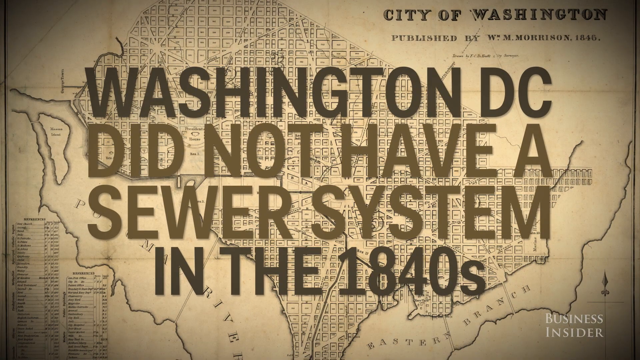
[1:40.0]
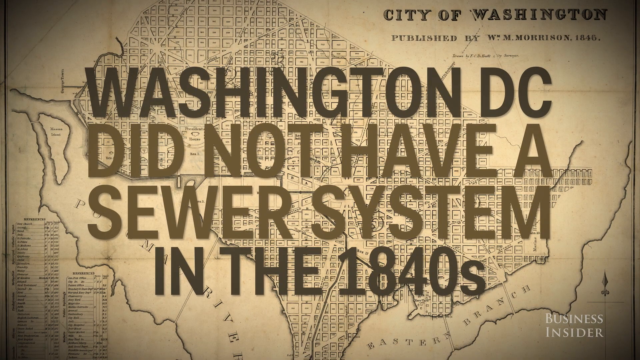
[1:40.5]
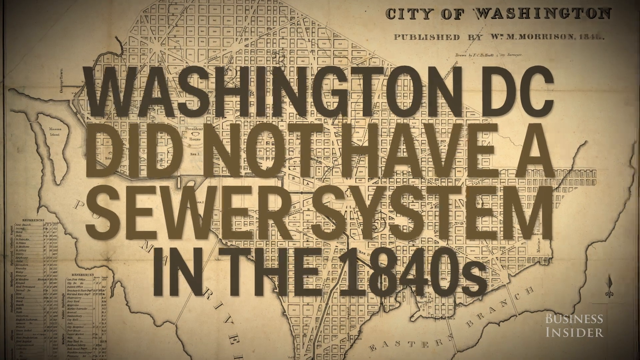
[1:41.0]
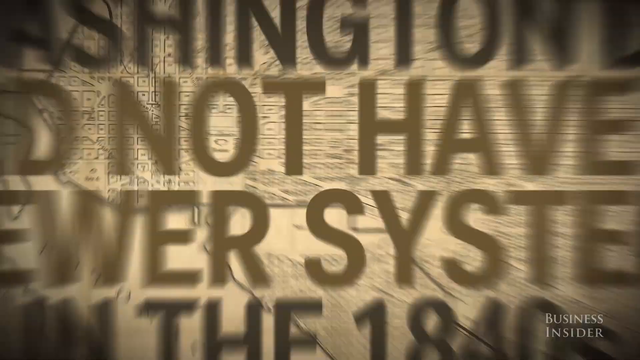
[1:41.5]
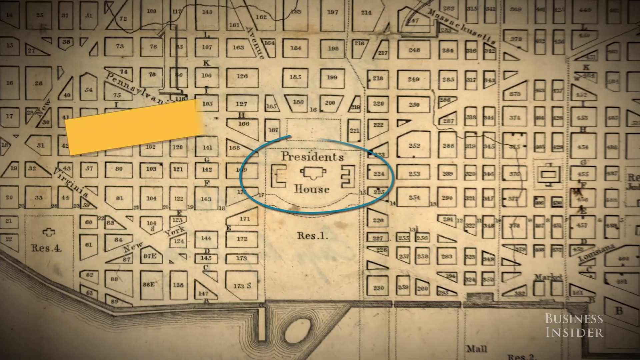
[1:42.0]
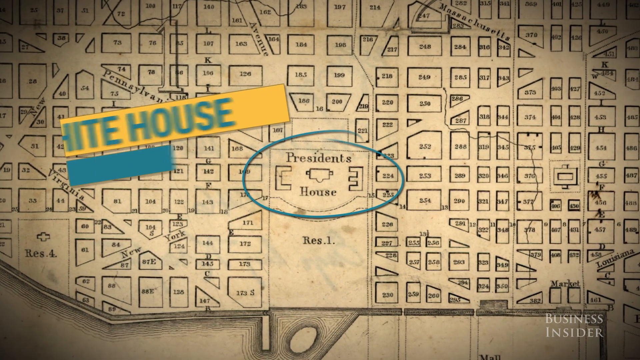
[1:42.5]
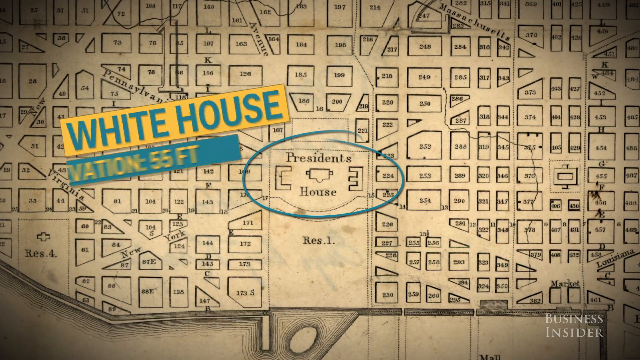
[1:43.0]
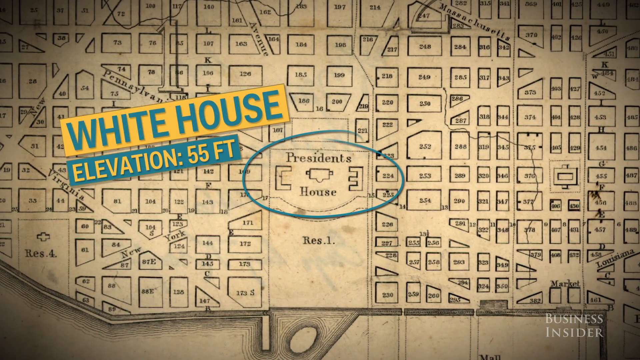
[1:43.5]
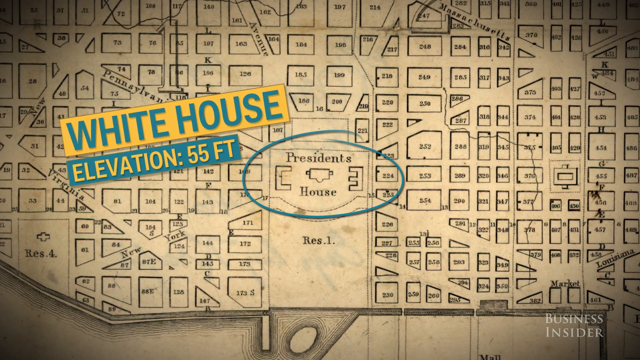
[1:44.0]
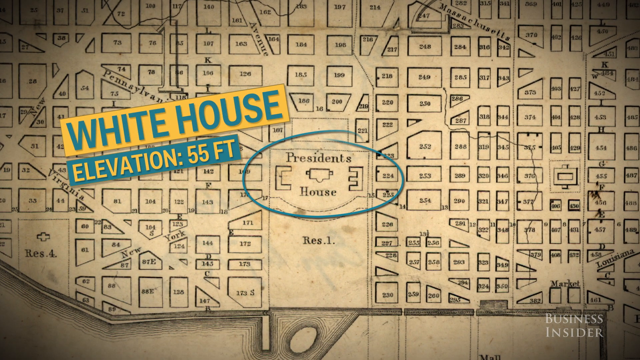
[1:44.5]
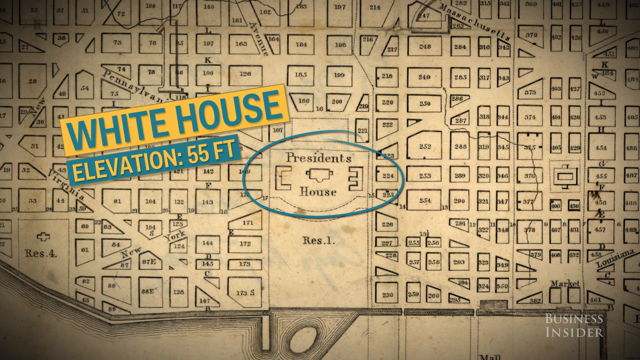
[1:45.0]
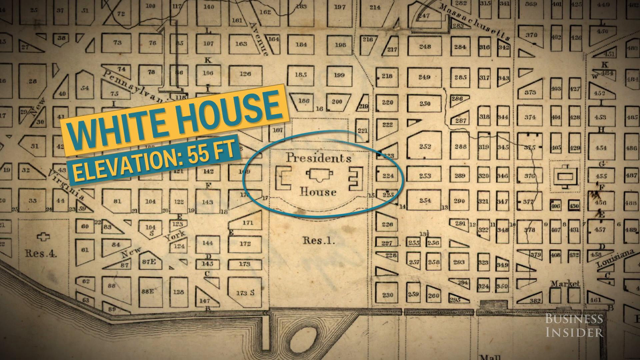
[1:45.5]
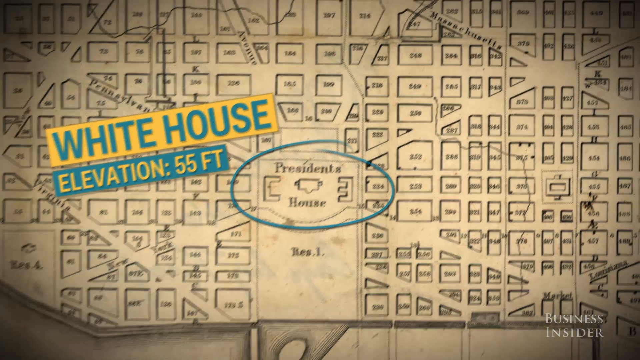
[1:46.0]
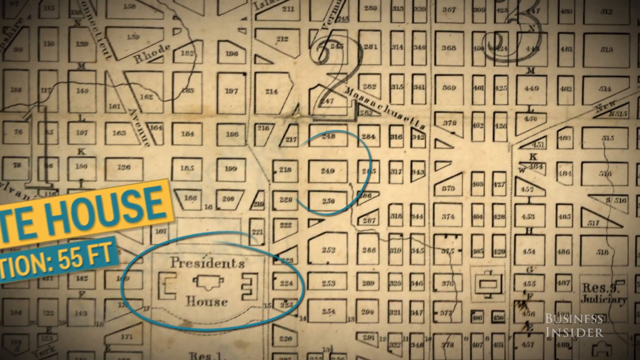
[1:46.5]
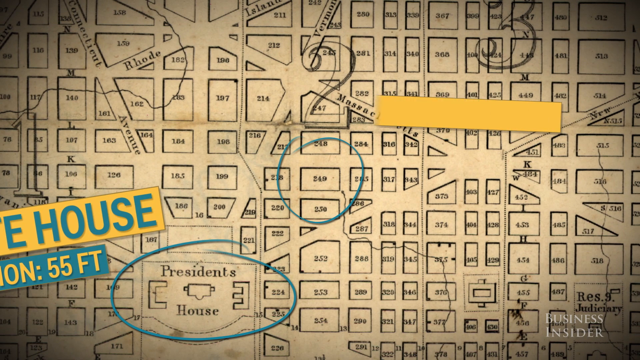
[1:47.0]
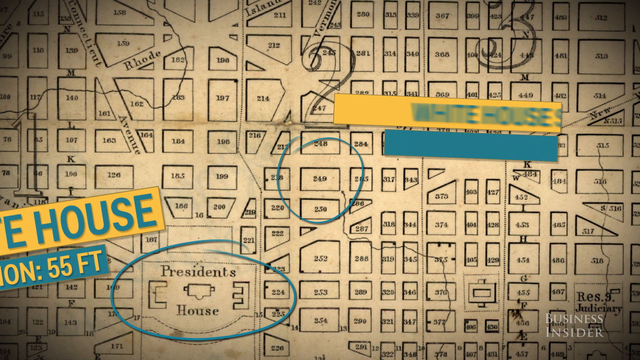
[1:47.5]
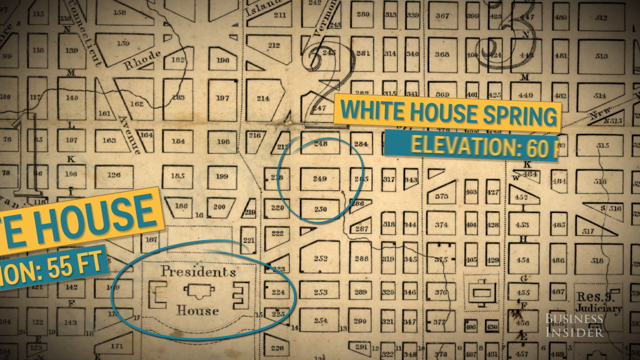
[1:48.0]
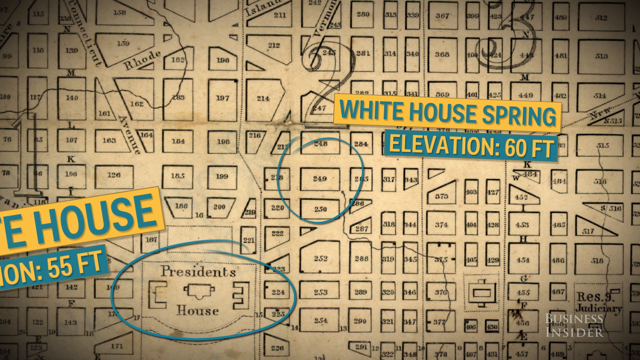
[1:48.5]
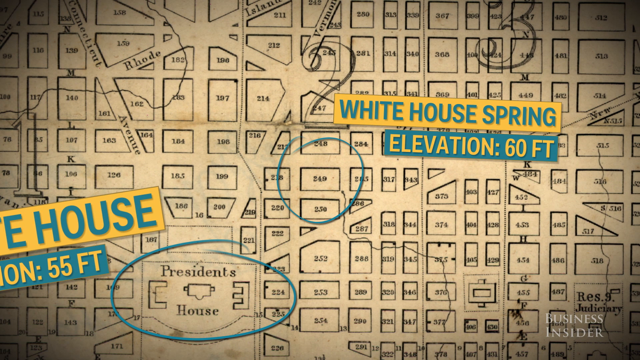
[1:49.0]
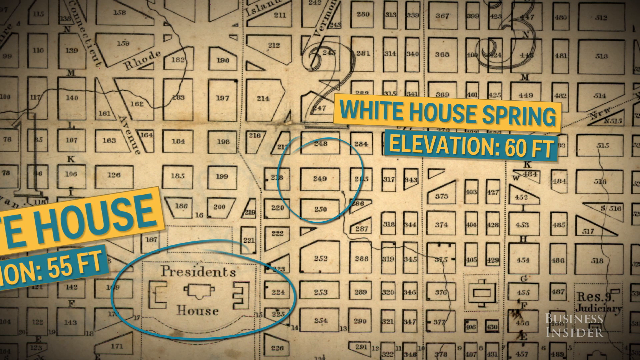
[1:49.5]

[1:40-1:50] The map with the text that Washington, D.C. did not have a sewer system in the 1840s is on screen. A different slide then shows an aerial view of the houses around the White House, with a blue circle in the middle where the President's House is. A label reading "White House elevation 55 feet" is off to the left, and the bottom right-hand corner reads "Business Insider." Next is a picture of the number 249, circled in blue, with a label reading "White House spring elevation 60 feet."